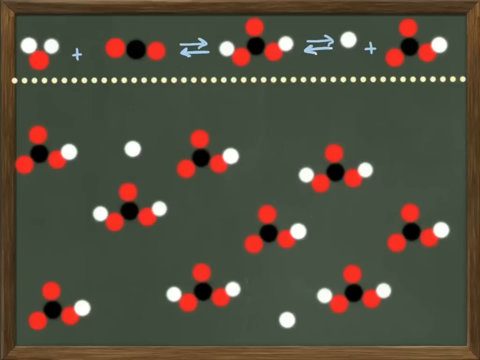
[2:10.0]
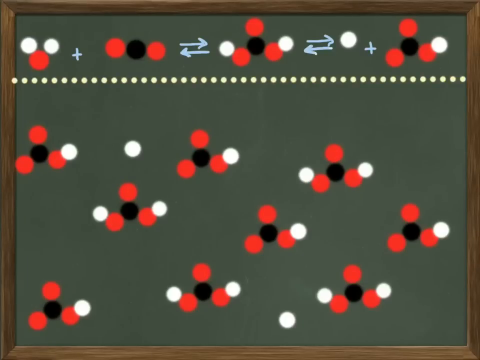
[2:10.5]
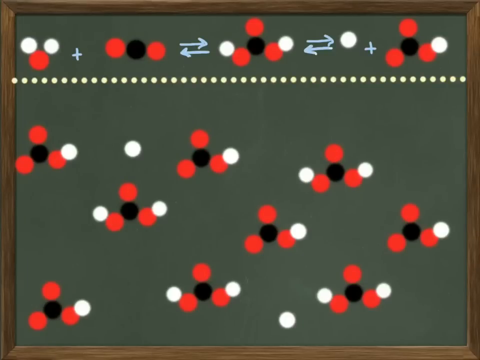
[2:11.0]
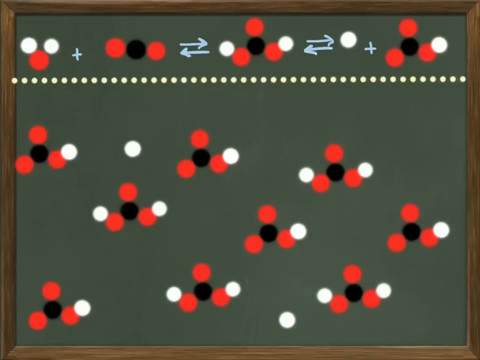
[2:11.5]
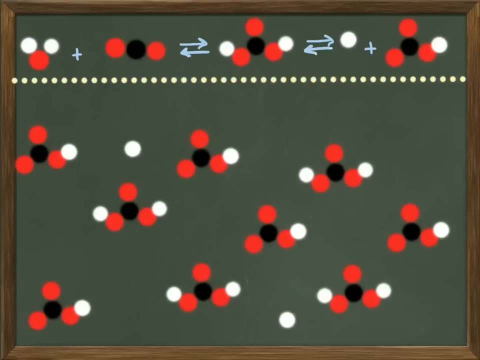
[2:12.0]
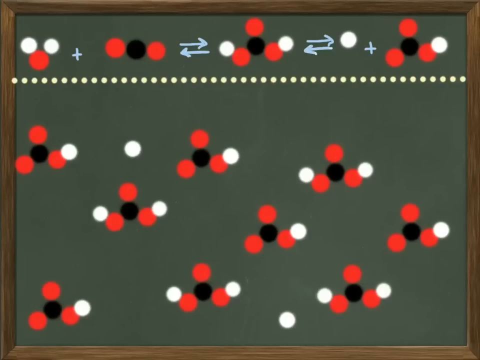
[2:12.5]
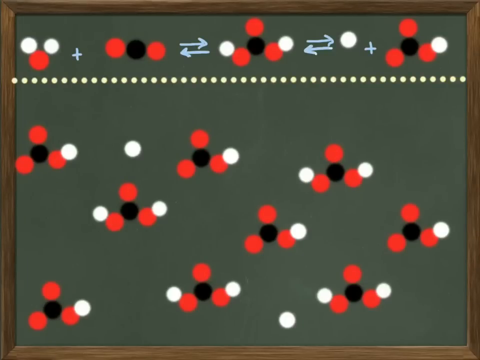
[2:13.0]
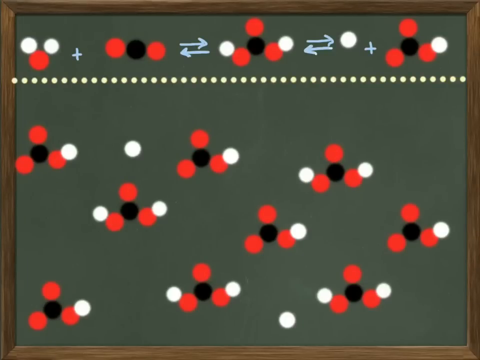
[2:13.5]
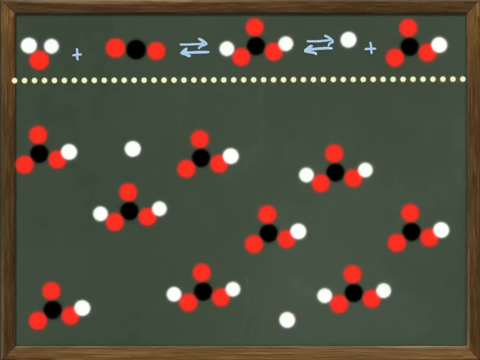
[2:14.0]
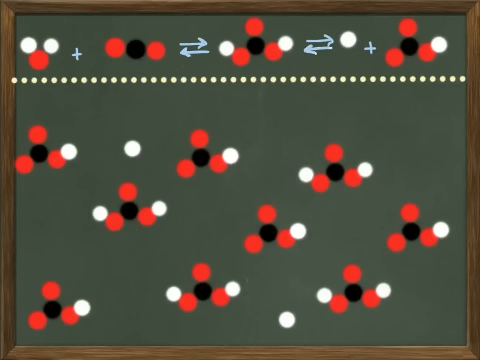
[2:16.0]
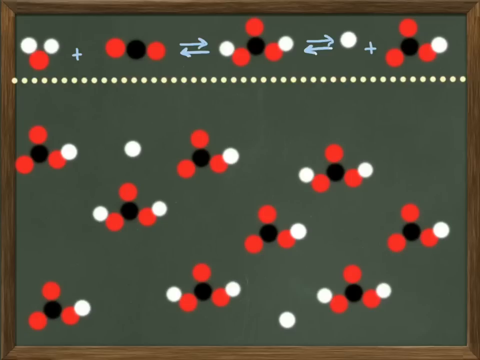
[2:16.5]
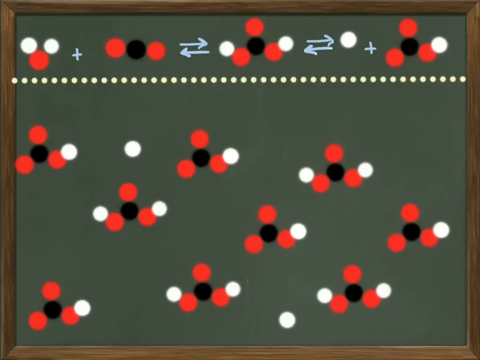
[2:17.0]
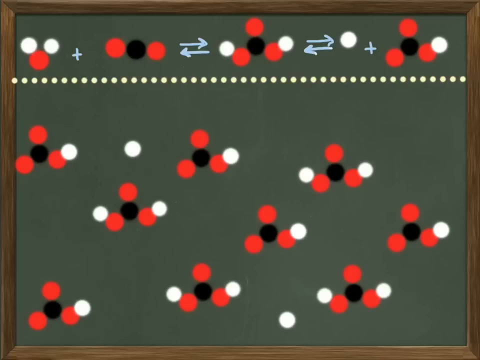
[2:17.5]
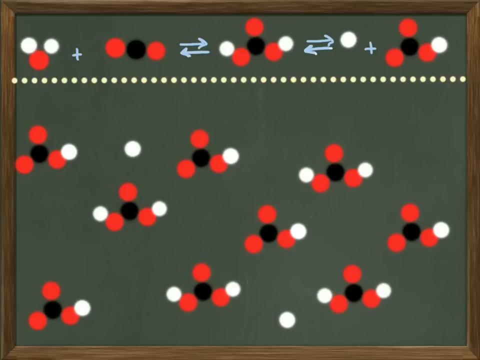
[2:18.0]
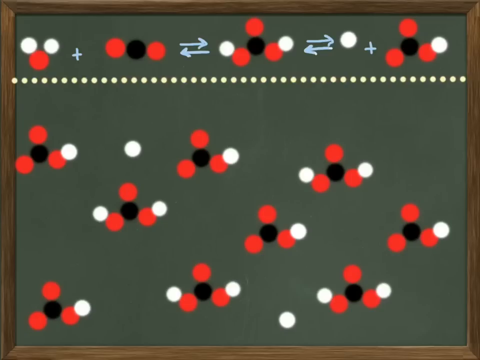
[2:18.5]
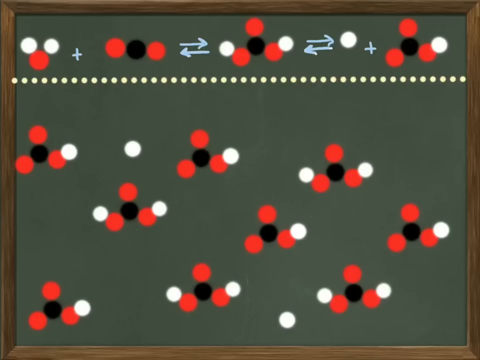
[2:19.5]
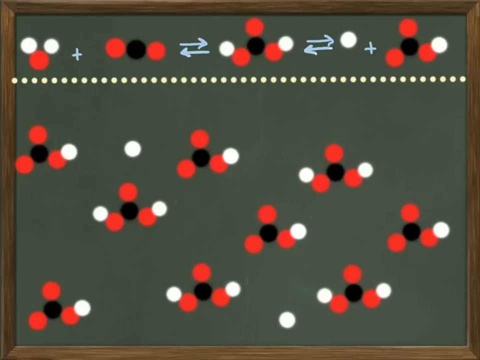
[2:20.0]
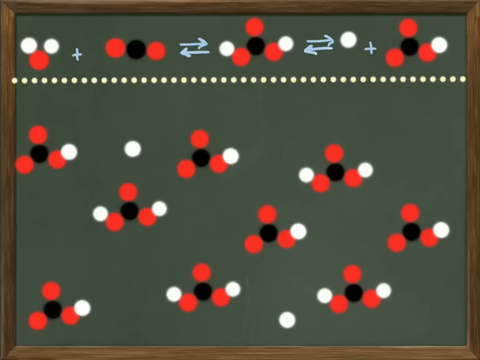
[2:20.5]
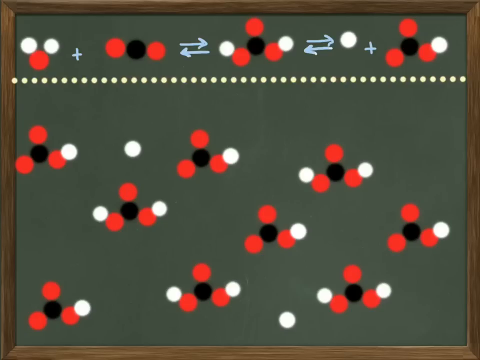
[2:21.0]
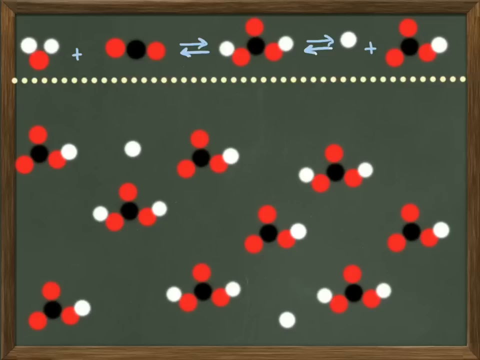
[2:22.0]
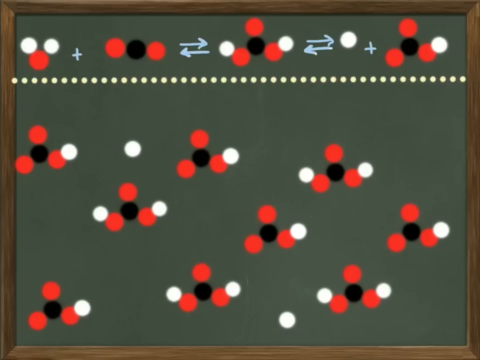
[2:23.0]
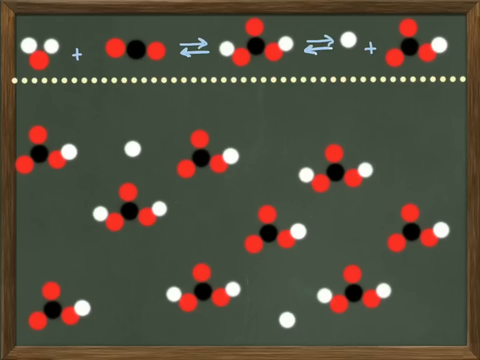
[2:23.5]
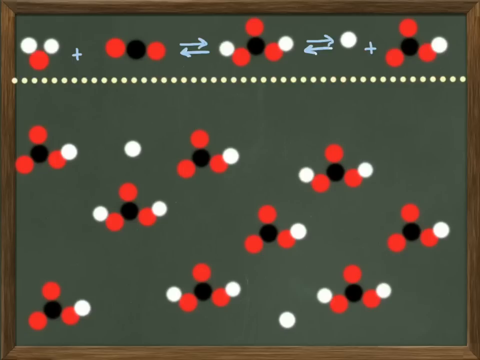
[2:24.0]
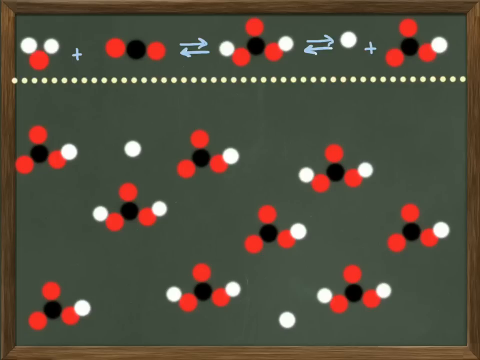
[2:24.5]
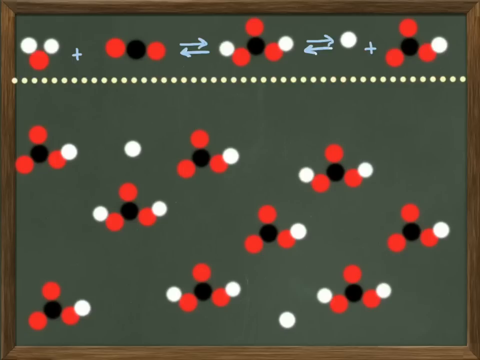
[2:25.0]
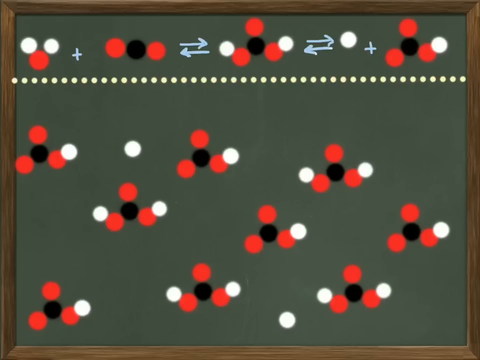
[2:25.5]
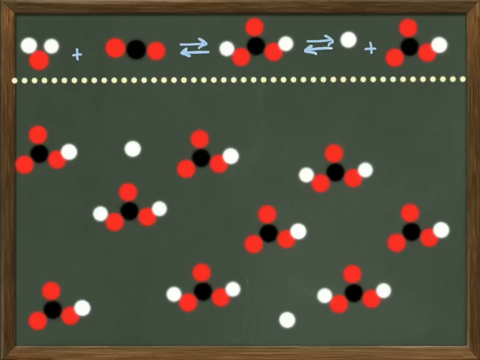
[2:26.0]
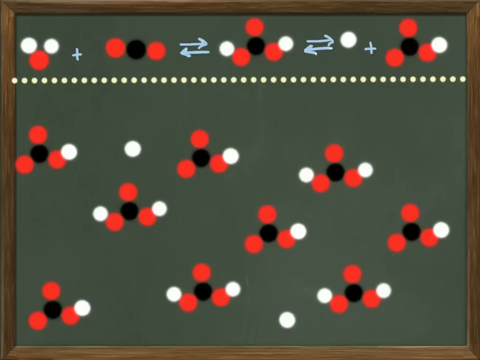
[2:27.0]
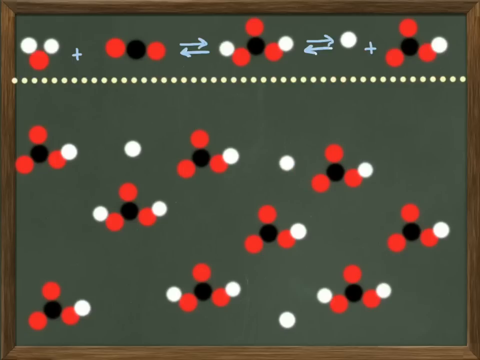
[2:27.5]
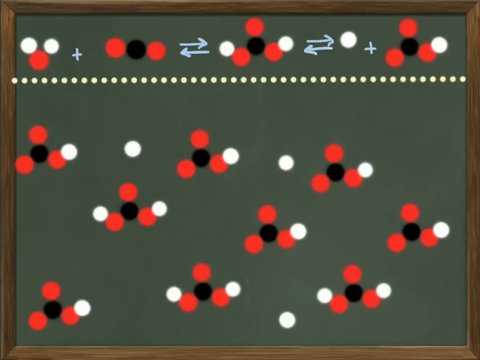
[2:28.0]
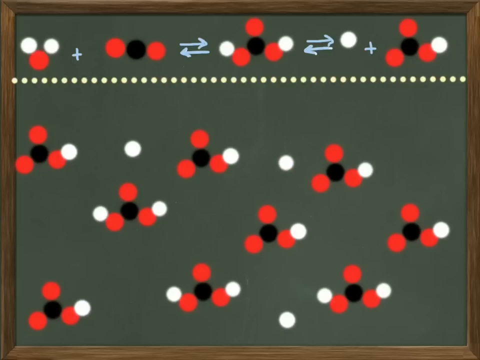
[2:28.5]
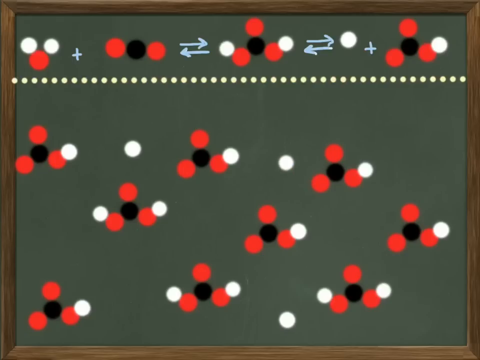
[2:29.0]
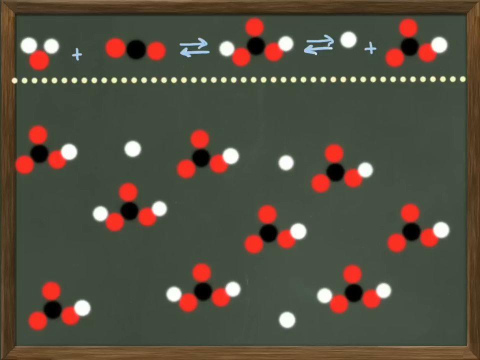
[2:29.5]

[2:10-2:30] The equations are on the board, including the bicarbonate equation, with oxygen, bicarbonate and carbon dioxide represented. Various red, black and white dots fill the busy board. The only movement is a single oxygen being moved from one place to another; after that nothing more happens.